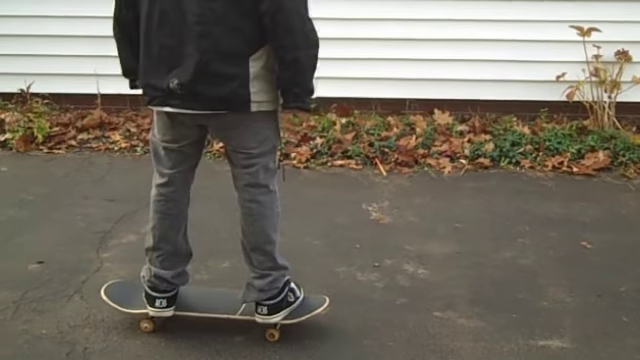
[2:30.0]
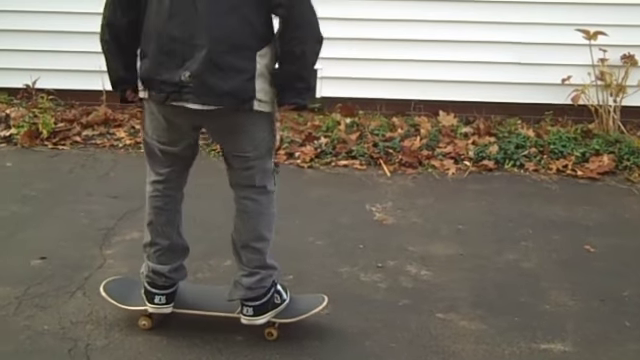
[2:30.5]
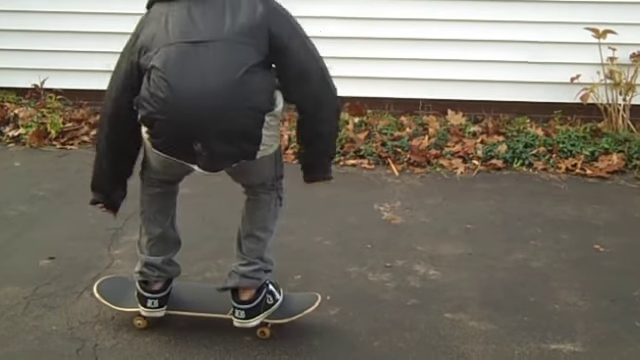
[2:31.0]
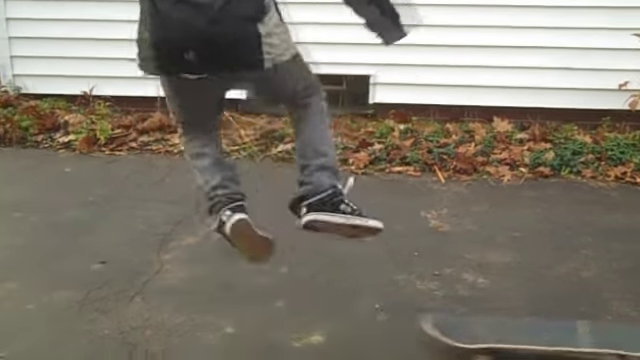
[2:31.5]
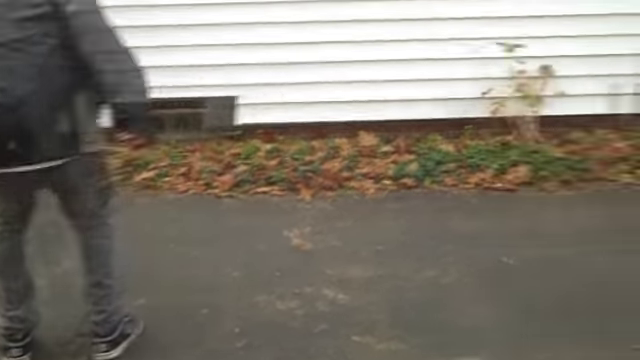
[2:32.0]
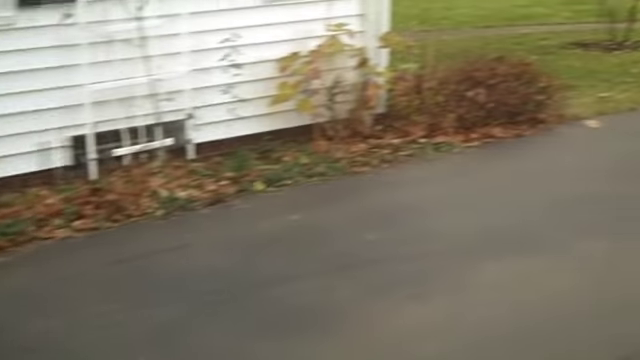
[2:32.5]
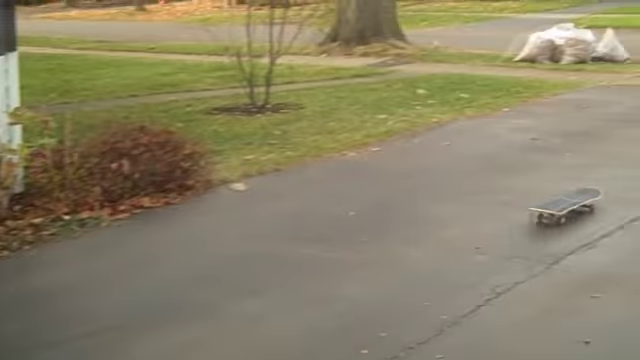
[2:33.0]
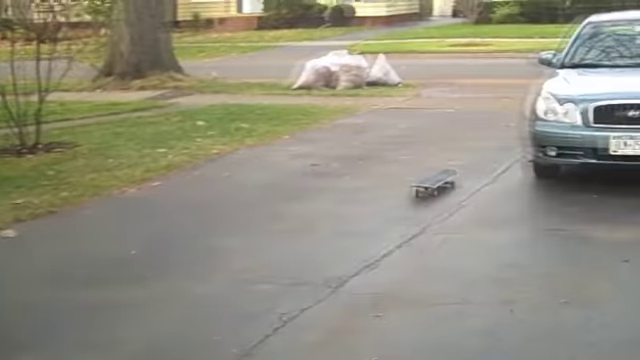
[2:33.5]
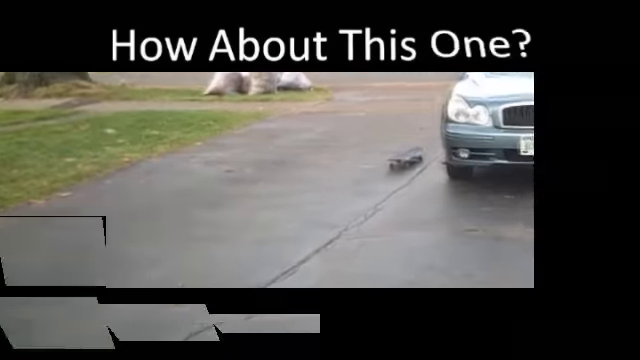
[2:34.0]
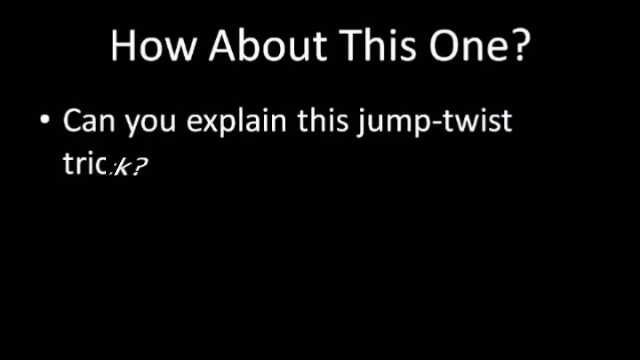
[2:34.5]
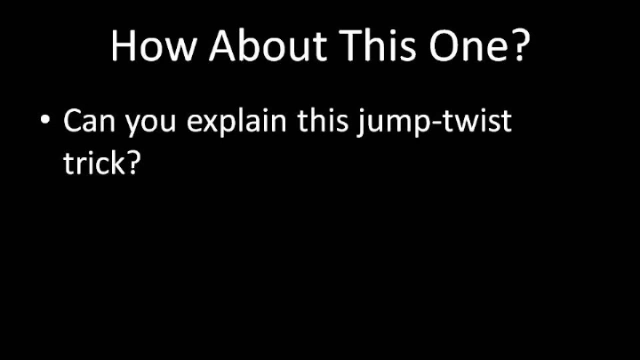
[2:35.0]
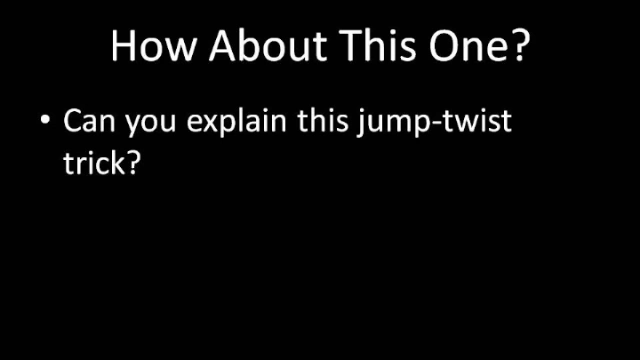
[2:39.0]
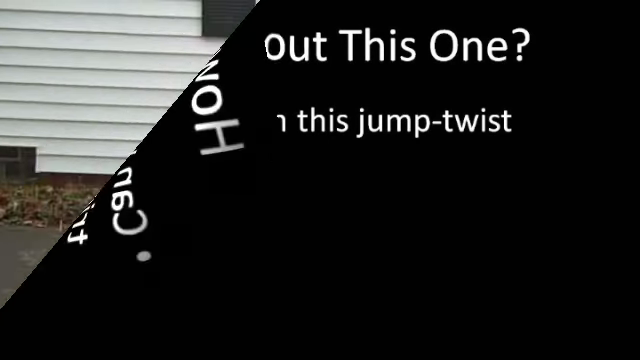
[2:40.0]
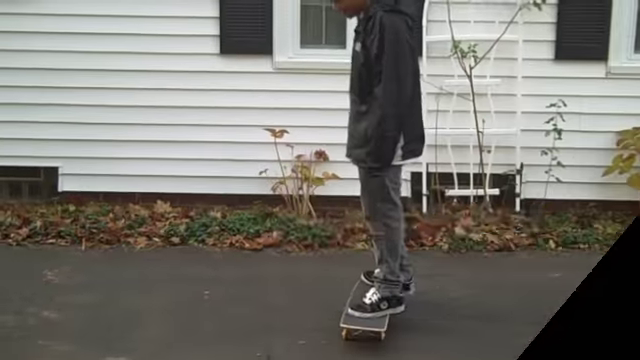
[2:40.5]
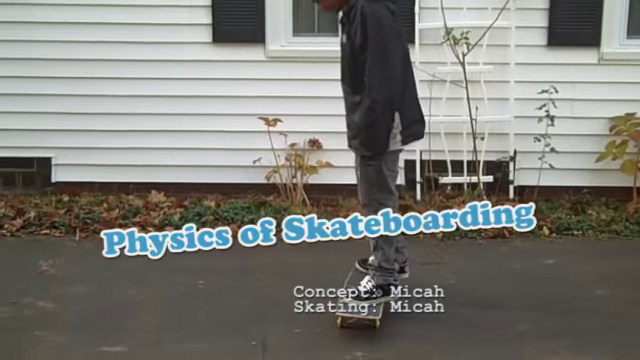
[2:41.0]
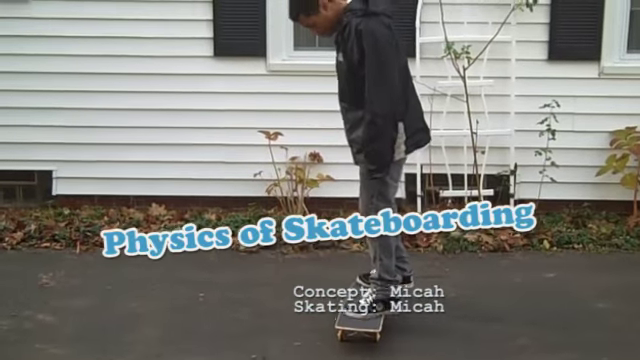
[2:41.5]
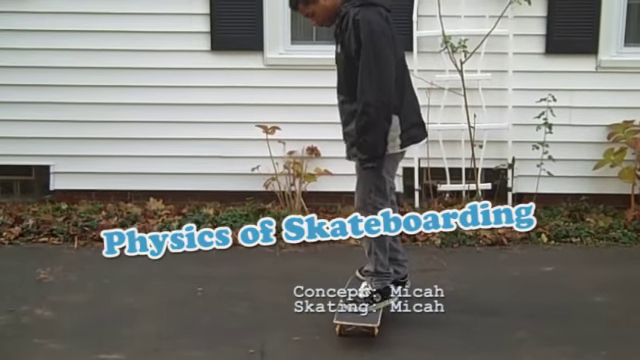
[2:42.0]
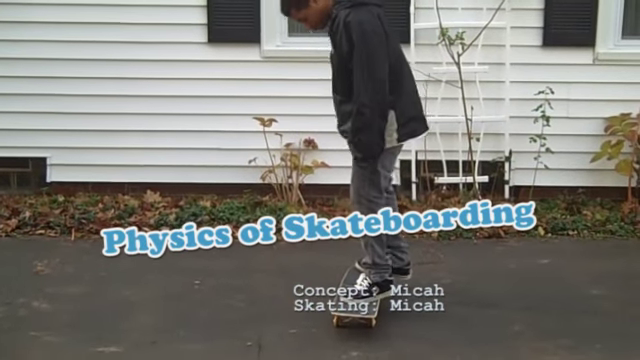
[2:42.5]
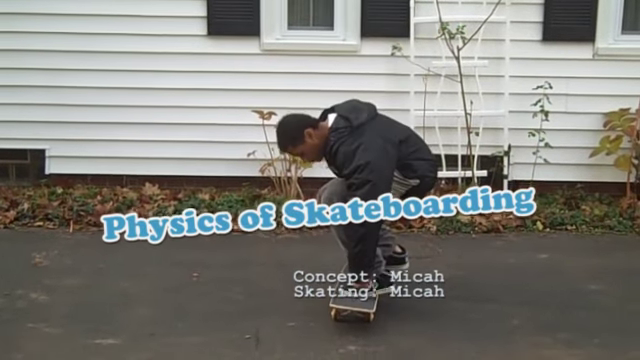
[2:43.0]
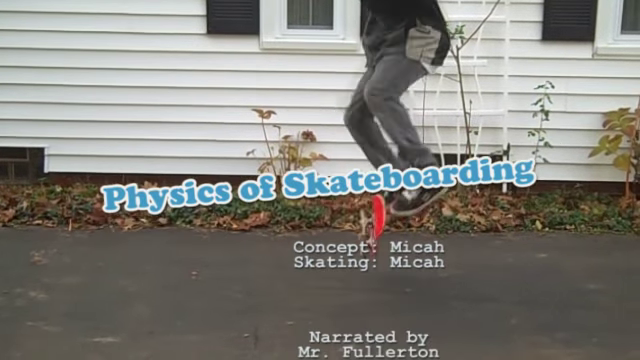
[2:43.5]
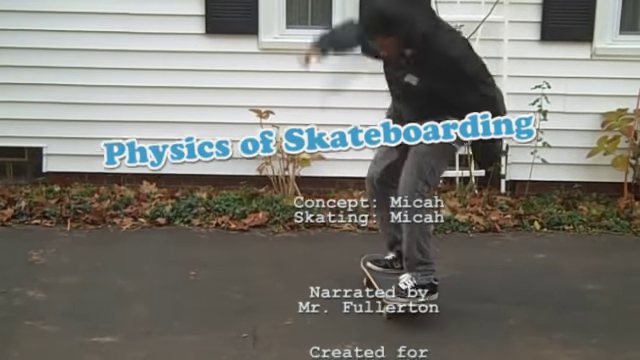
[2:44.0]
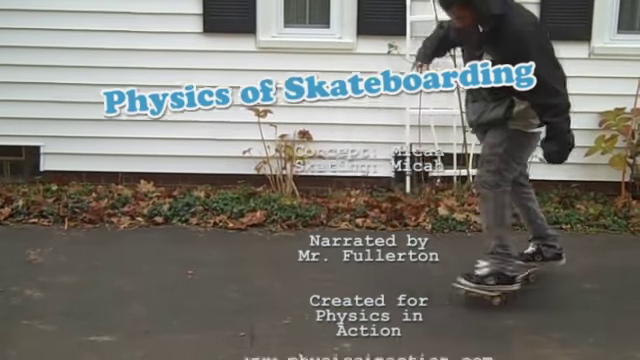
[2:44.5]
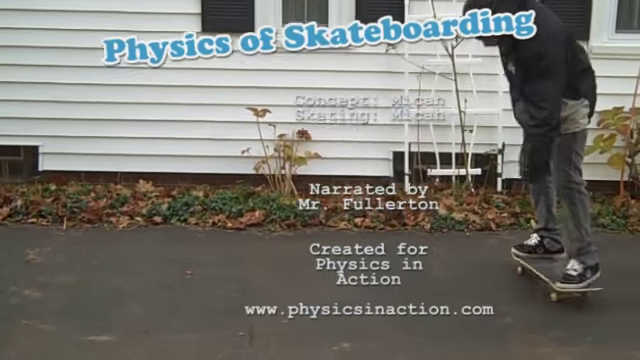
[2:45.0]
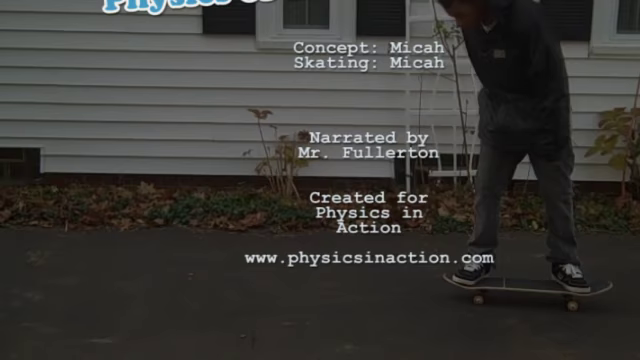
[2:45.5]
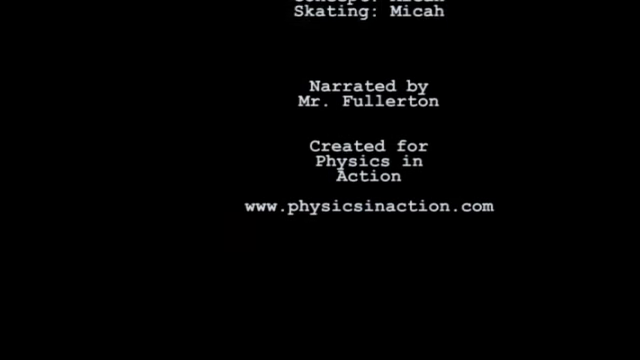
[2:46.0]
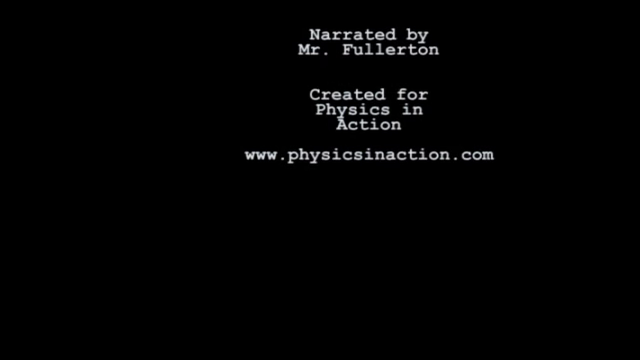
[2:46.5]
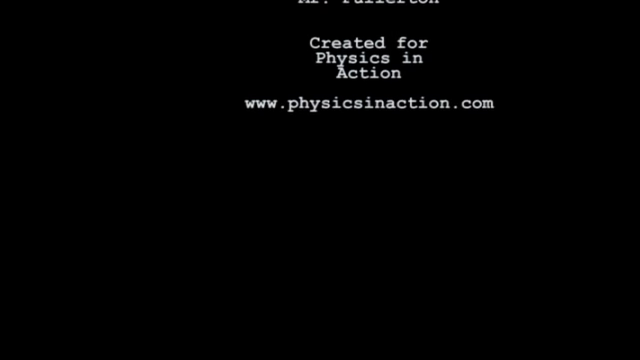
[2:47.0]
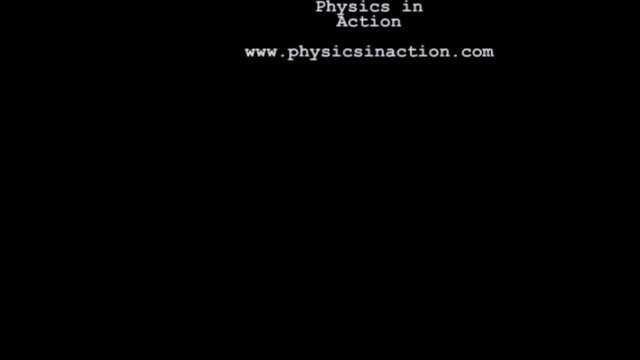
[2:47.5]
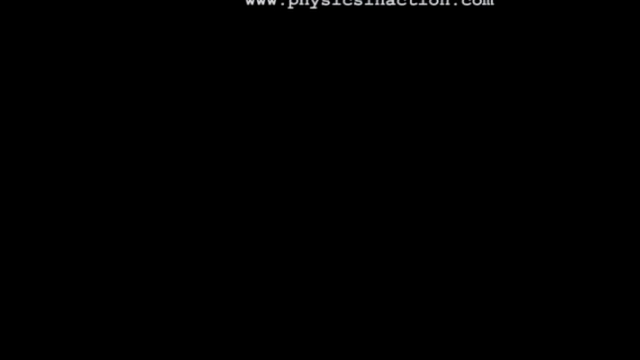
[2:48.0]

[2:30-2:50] He goes back and forth on the board, using momentum to move left to right in place. He bends down and jumps, pushing with his feet so the skateboard rolls to the right, and it rolls down the driveway by itself past the parked blue car. Another slide appears with white writing at the top reading "how about this one?" and a bullet point reading "can you explain this jump twist trick?" The slide folds over to the side like a newspaper, and the kid is shown standing sideways, looking at a skateboard. Text reading "Physics of Skateboarding" runs diagonally upward in blue with a white outline; underneath, in white, it says "Concept" and "McCaw," and below that "Skating" and "McCaw." He bends his legs almost to a 90-degree angle, jumps with his arms out, flips the skateboard in place with a twisting action, and lands back on it. Text underneath reads "Narrated by Mr. Fullington, created for Physics in Action" and "physicsinaction.com," and then credits scroll up and out of the way.